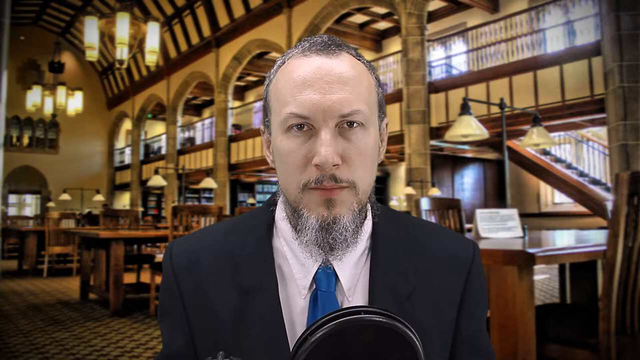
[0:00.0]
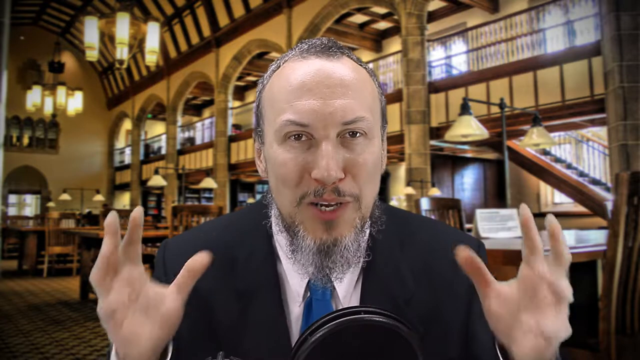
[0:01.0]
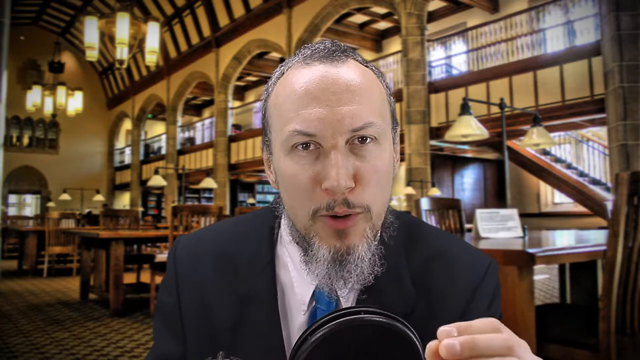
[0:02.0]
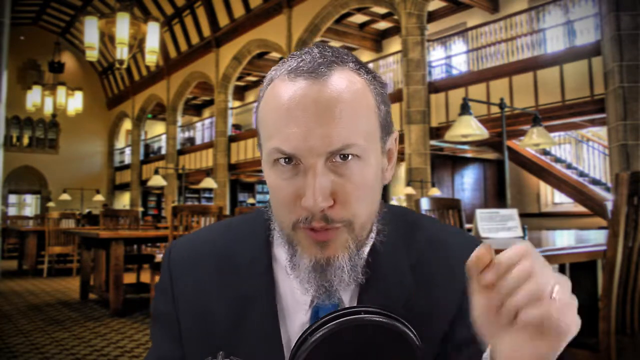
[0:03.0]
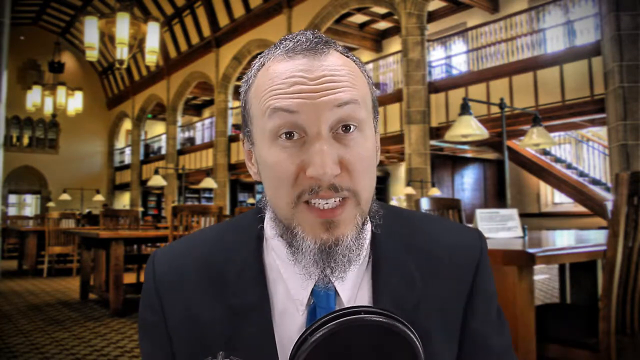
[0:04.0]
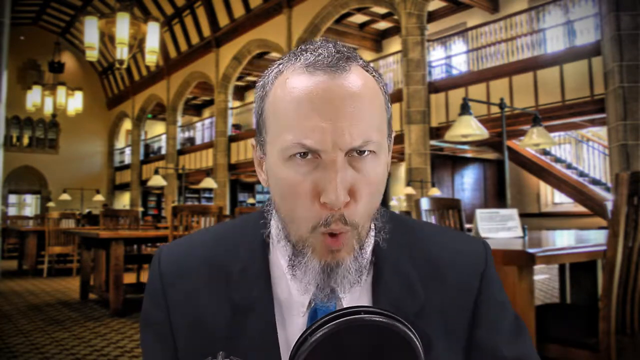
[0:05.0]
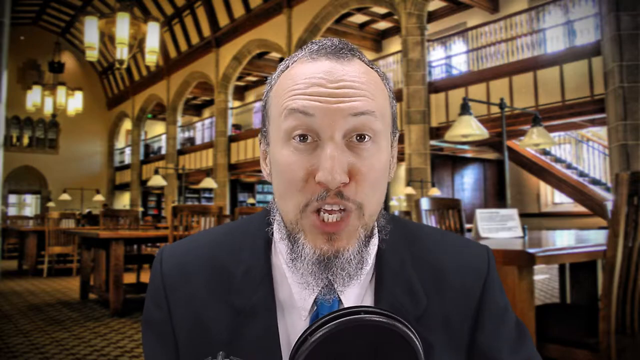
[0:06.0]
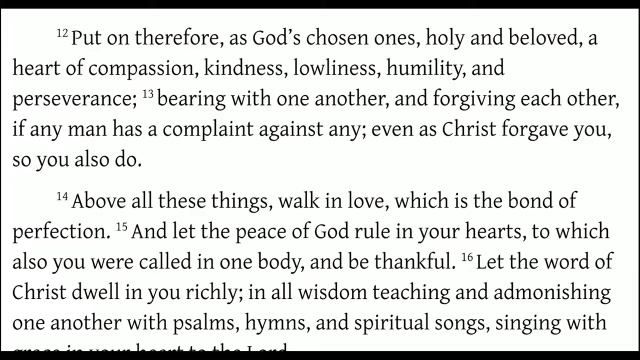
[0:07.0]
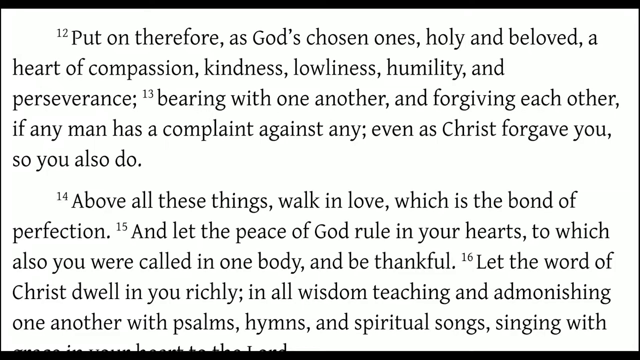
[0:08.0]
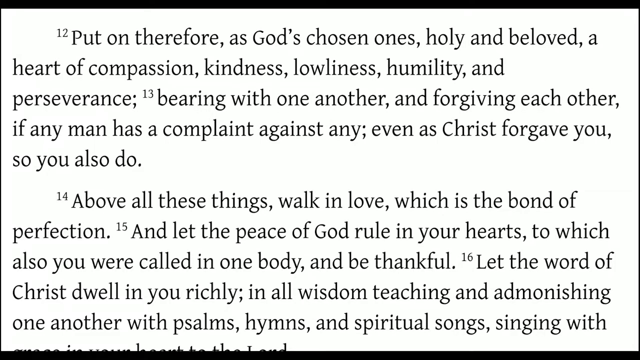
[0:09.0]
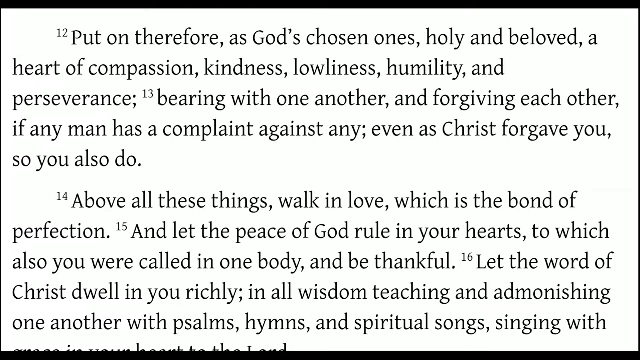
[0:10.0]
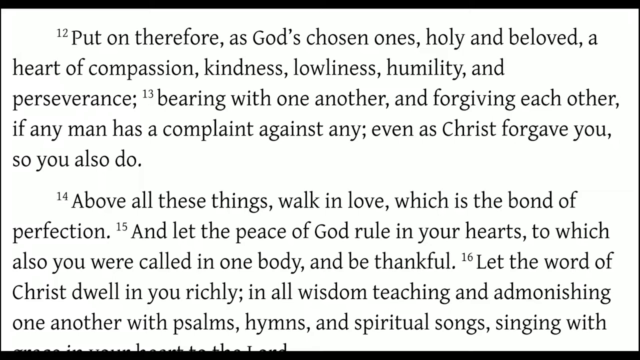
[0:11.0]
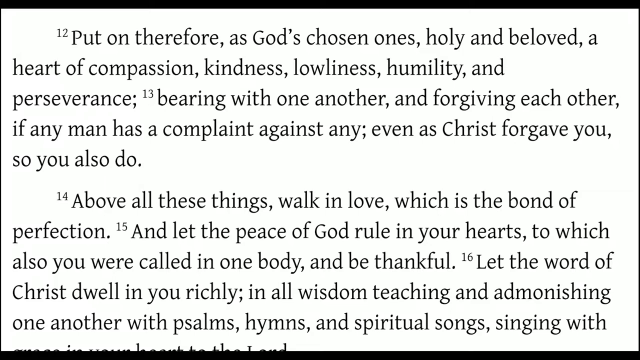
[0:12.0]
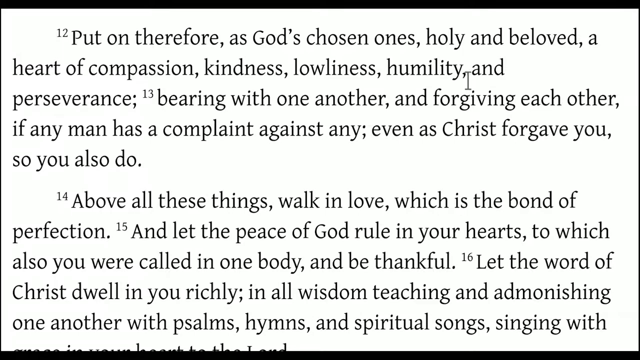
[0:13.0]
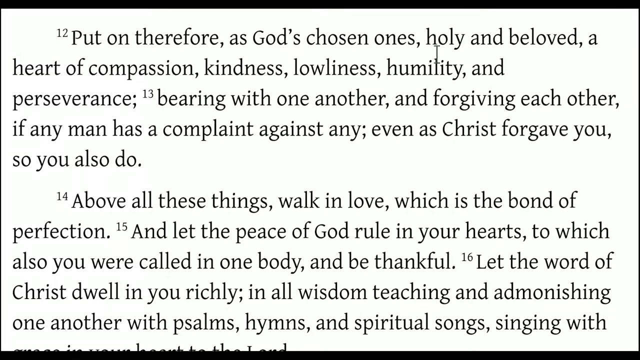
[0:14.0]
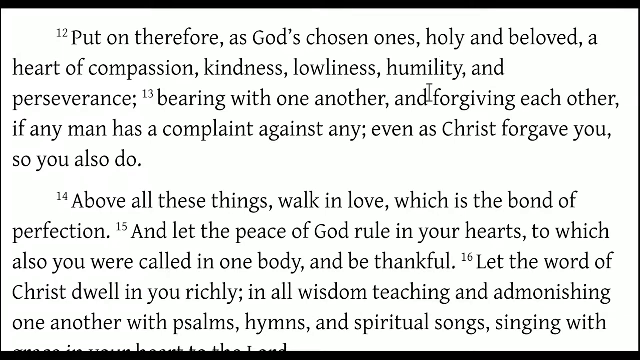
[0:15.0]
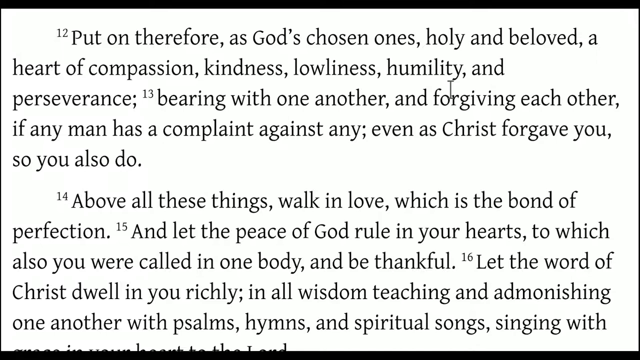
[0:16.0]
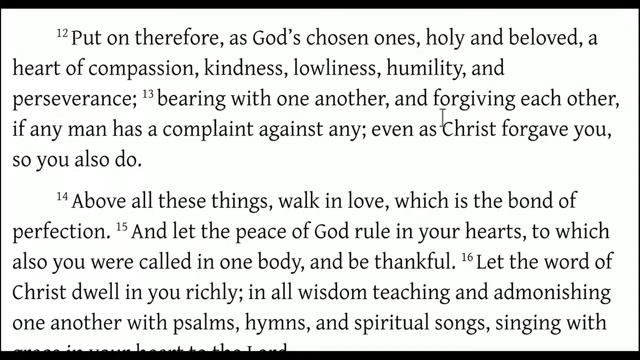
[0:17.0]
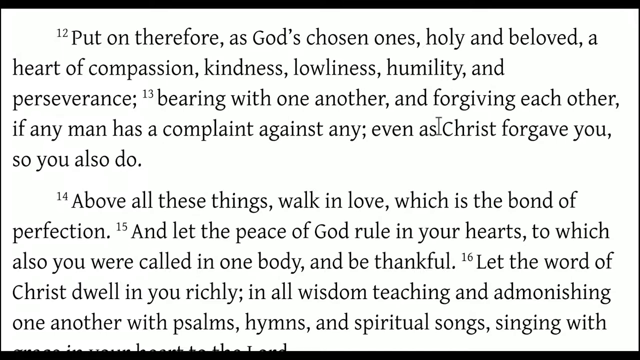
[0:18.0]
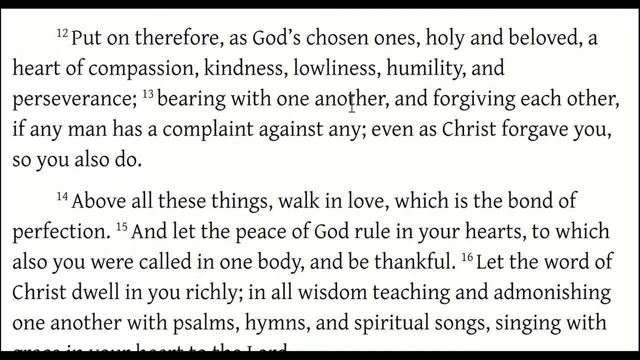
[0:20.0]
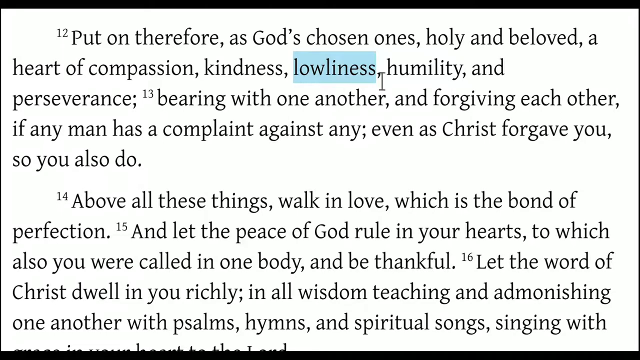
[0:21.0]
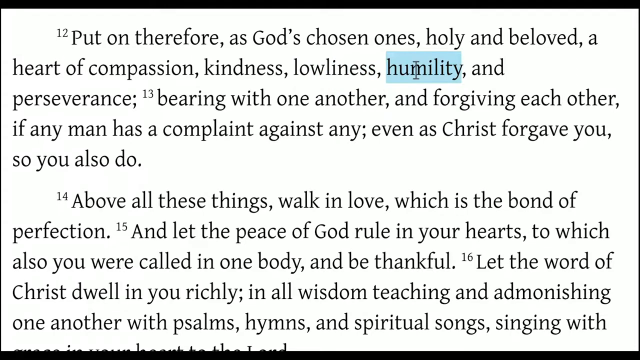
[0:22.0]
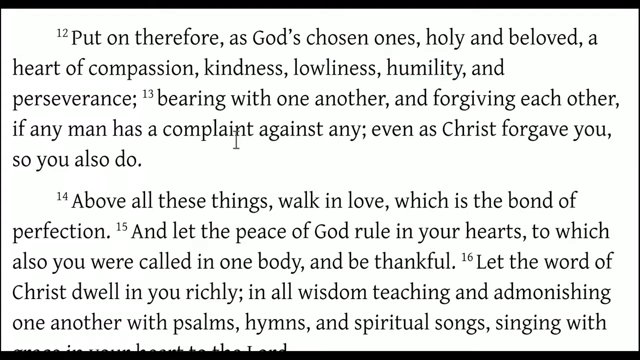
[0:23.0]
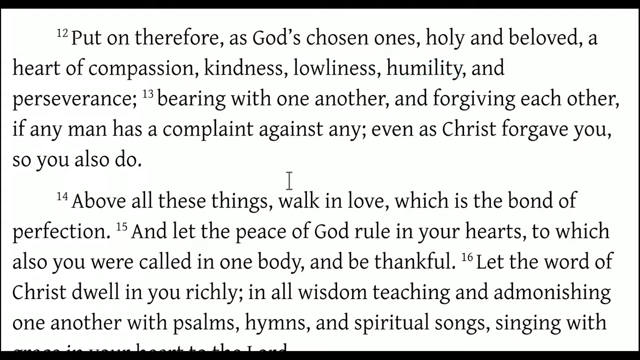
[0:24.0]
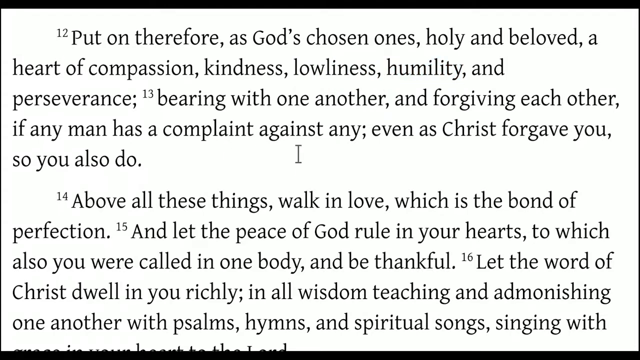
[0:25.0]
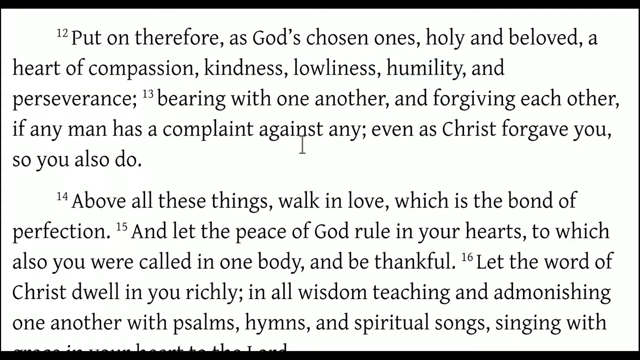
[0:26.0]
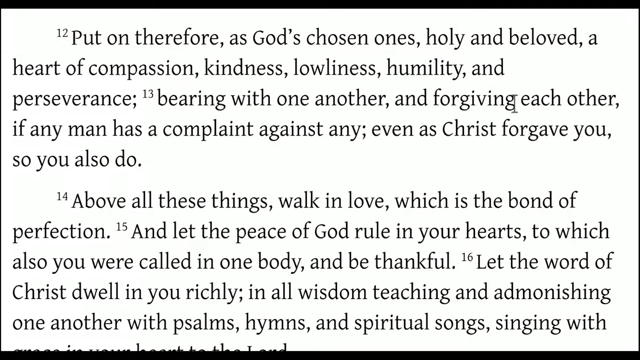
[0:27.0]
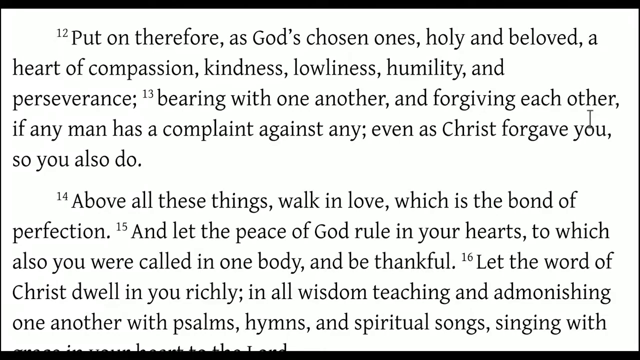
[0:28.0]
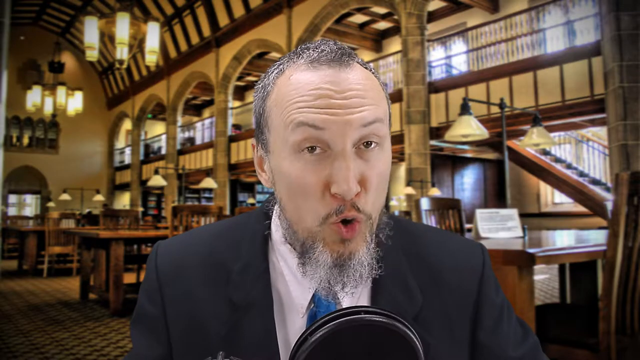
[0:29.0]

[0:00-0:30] A young man, apparently in his early 30s, appears on screen. He has a full goatee with a little scruff on the bottom of his chin, a scruffy-looking mustache, and very short hair on top that is already starting to thin, so he may be closer to his mid to late 30s. He wears a business suit, a white shirt and a blue tie. He is very animated, talking into the screen while raising his hands and moving his eyebrows up and down. A message then pops up on the screen reading "put on therefore as God's chosen one, holy and beloved, a heart of compassion, kindness and lowliness, humility and perseverance, bearing with one another and forgiving each other." The whole message stays on the screen while a mouse cursor moves from sentence to sentence, highlighting words. The view then flips back to the man, who is very animated again.